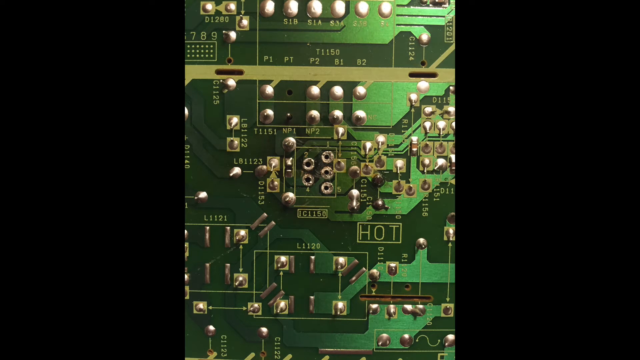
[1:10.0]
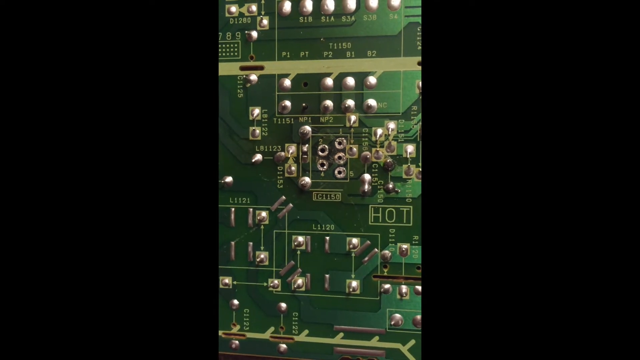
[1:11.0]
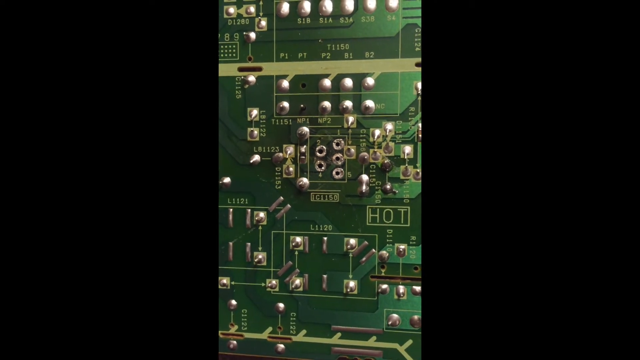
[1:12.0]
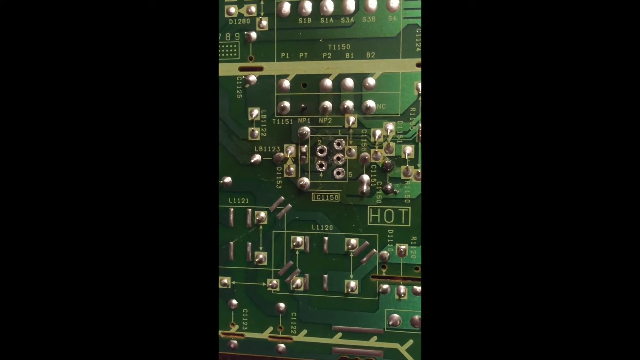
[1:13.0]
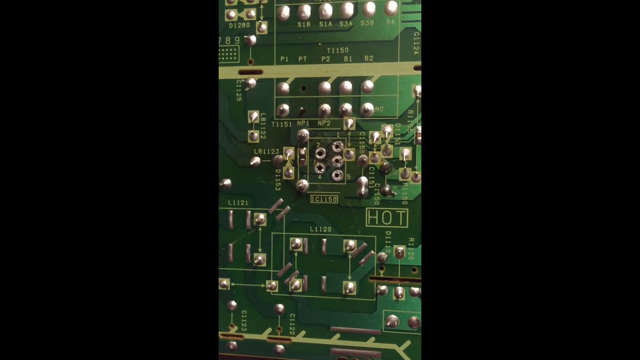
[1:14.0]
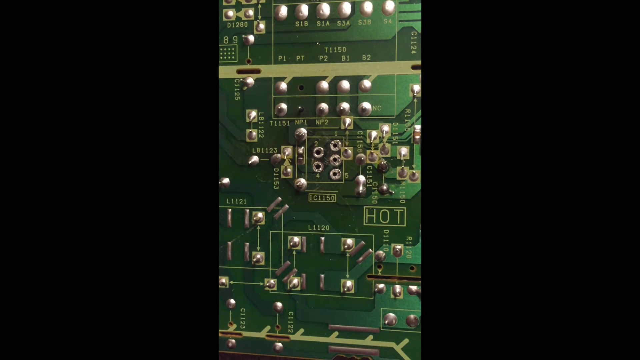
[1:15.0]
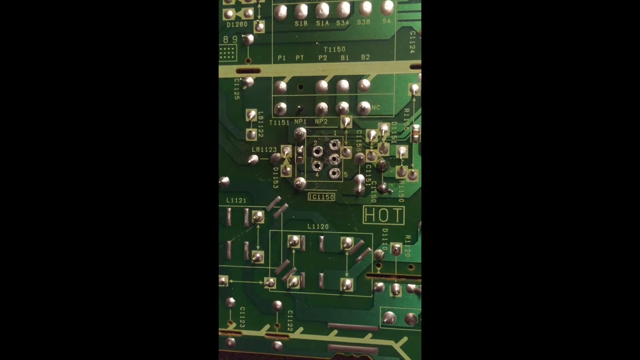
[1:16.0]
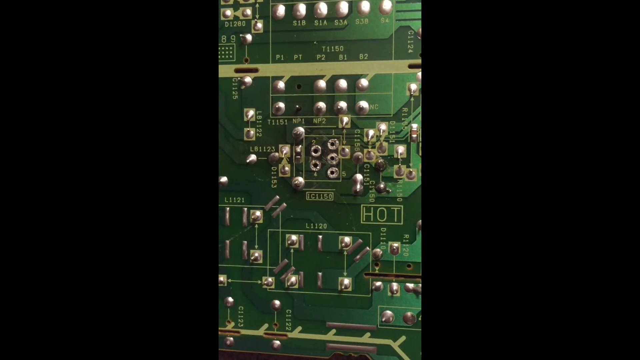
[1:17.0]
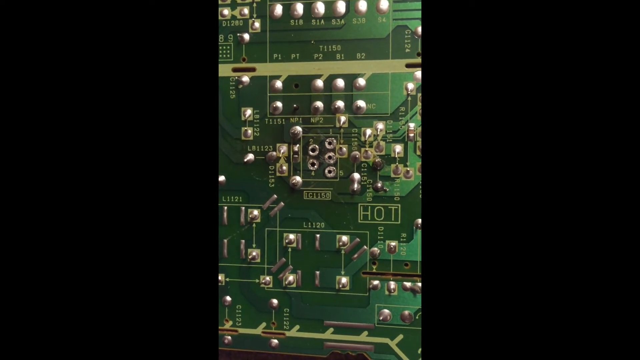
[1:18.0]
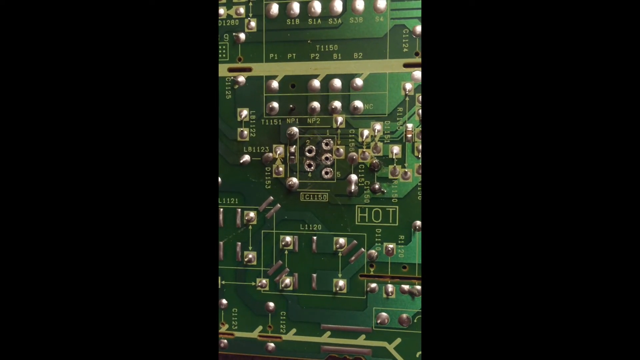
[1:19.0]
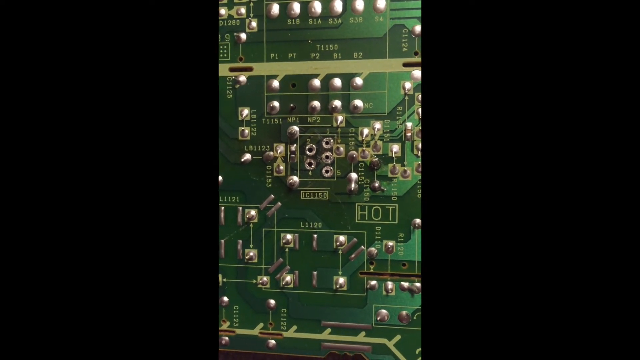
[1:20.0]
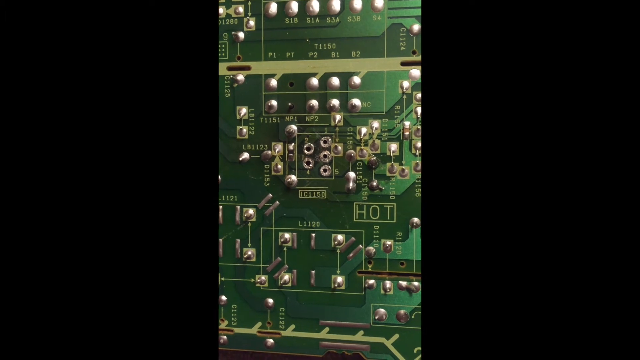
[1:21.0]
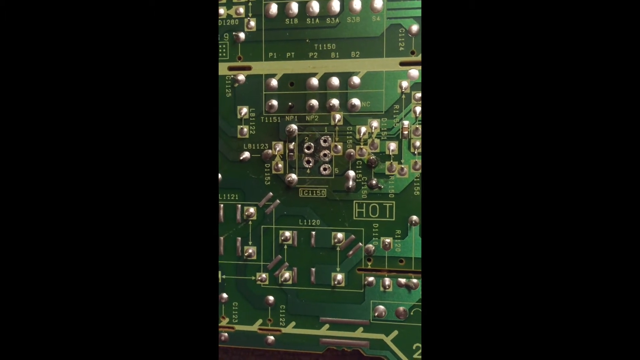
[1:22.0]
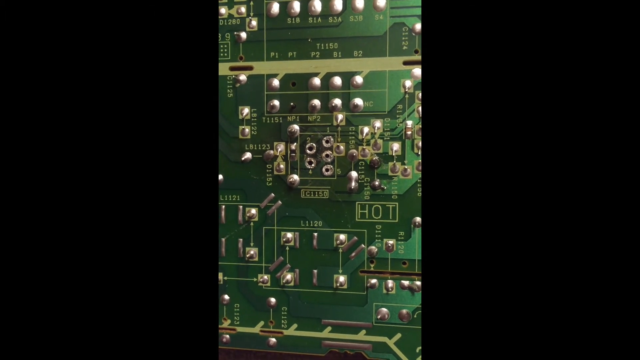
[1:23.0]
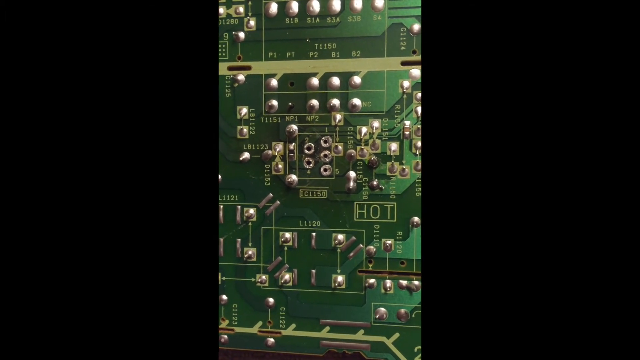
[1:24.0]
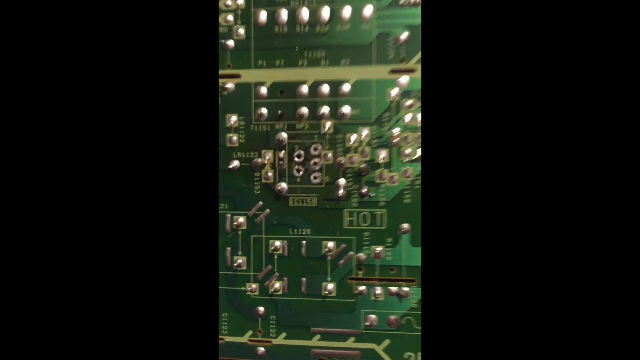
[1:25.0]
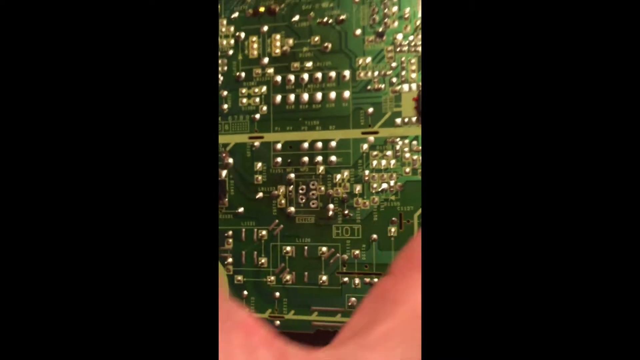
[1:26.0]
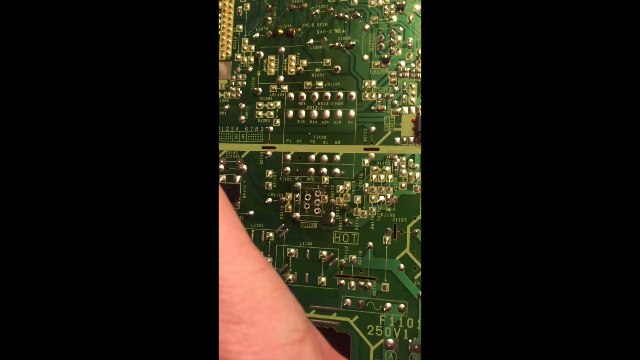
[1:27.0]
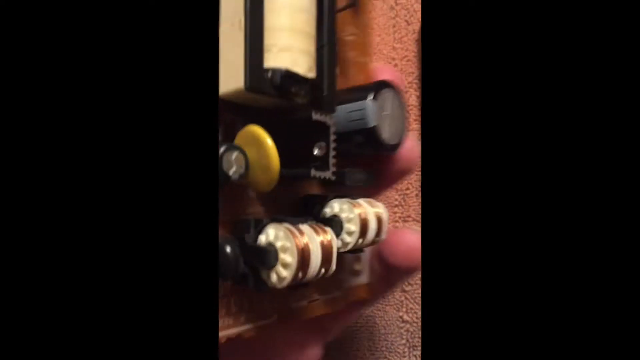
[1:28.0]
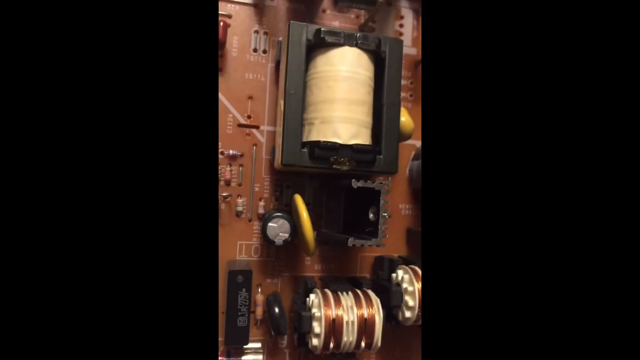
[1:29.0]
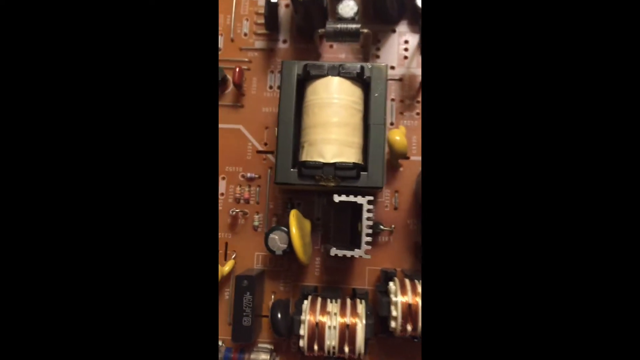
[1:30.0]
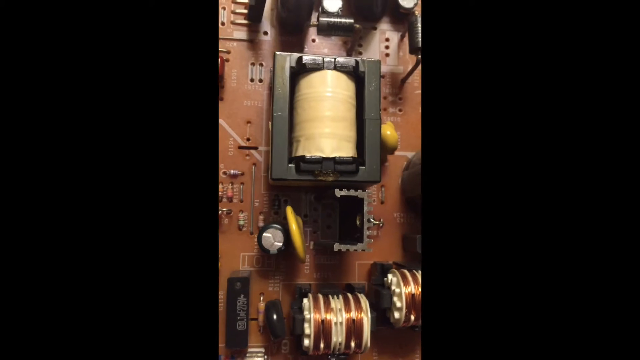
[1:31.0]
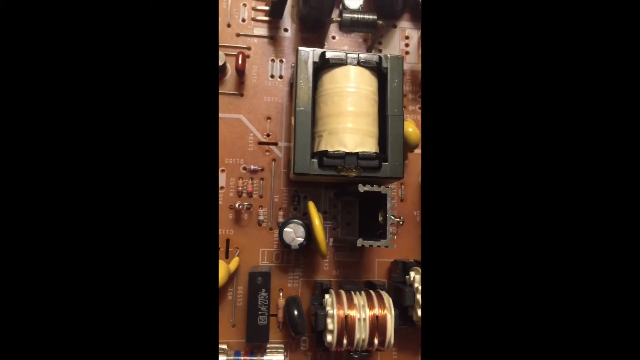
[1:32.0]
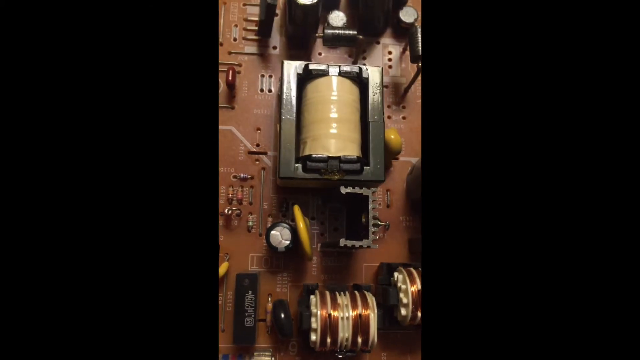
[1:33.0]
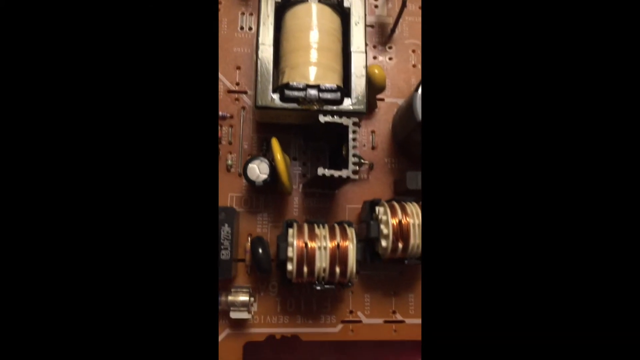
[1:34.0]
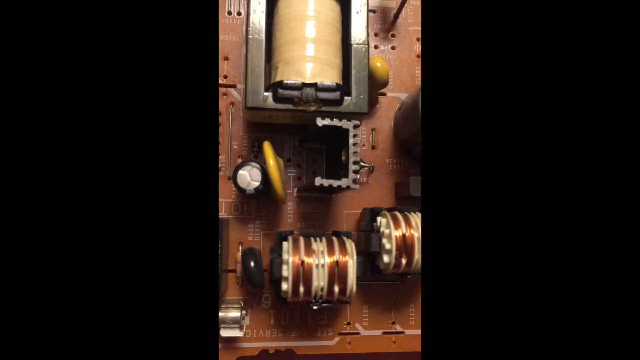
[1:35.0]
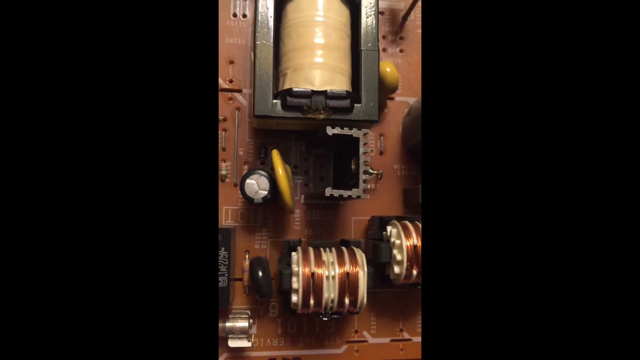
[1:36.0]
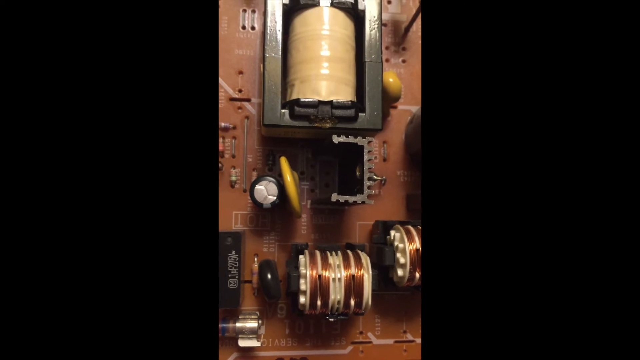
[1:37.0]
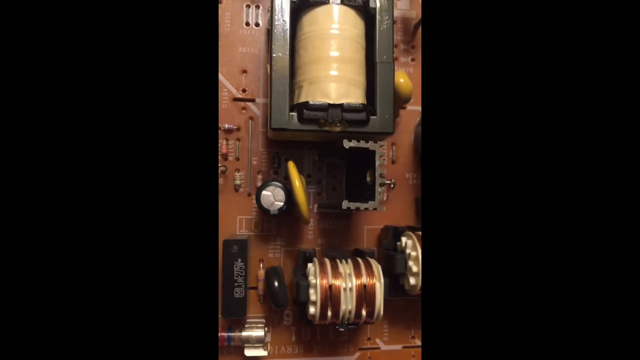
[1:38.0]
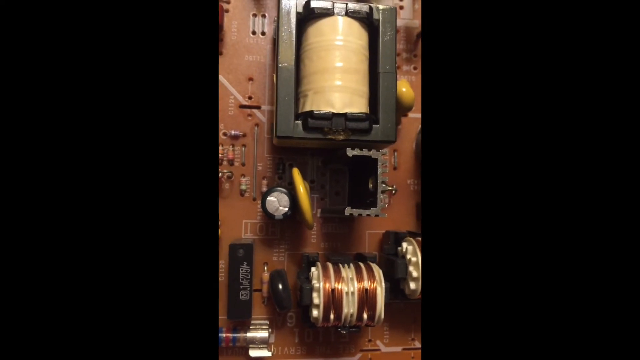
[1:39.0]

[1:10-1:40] The view of the PCB switches to a handheld camera, with the image shaking as the person films it. The person uses their left hand to grab the PCB and flips it around, revealing the other side with the Panasonic parts seen at the beginning. The circular row is in the center, and at the bottom are other wheels placed perpendicular to the main circular wheel in the center: the main one is vertical, while these two are horizontal. Their sides are yellow, and their center rows have a mix of brown on the sides with light yellow in the center; the spaces between the browns and the edges are light yellow as well. Above them is most of a square or rectangle, with the top, bottom and right sides present and the left side missing. To the left of it is another black, gray-topped cylinder tube, and there is a yellow disc facing the open rectangle.